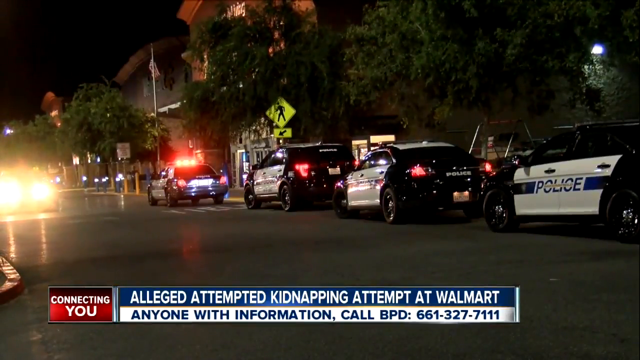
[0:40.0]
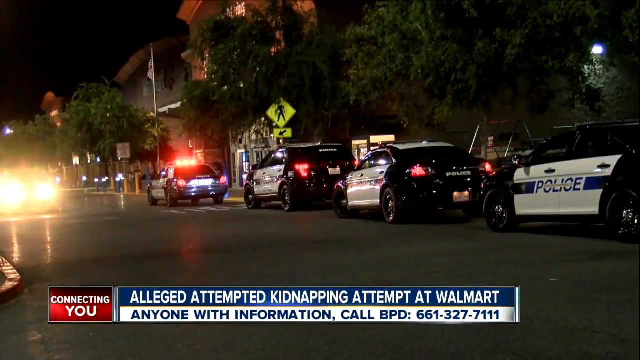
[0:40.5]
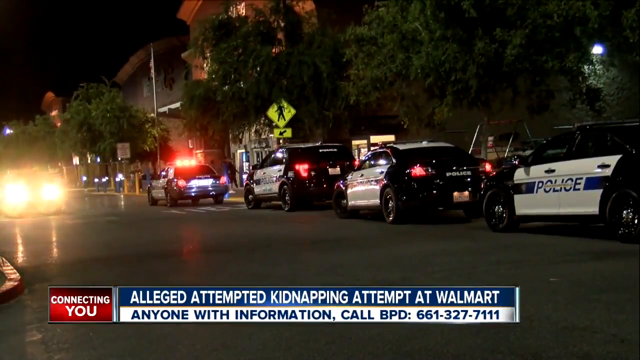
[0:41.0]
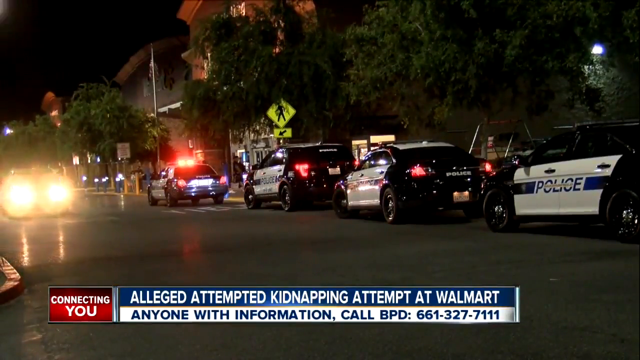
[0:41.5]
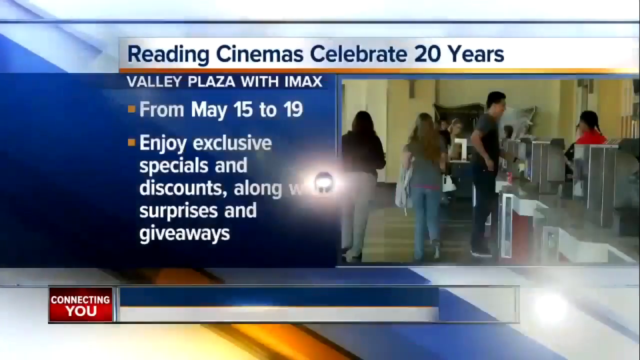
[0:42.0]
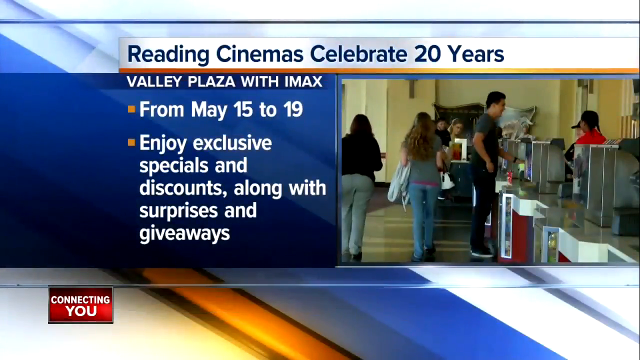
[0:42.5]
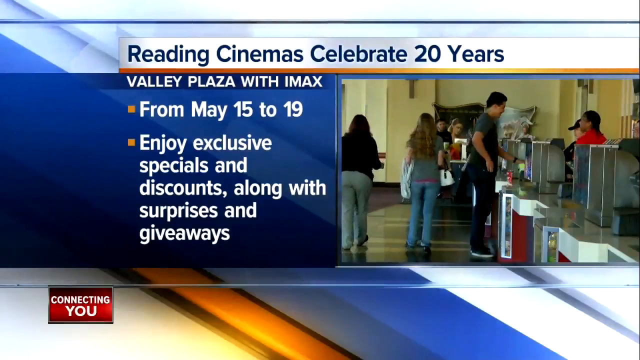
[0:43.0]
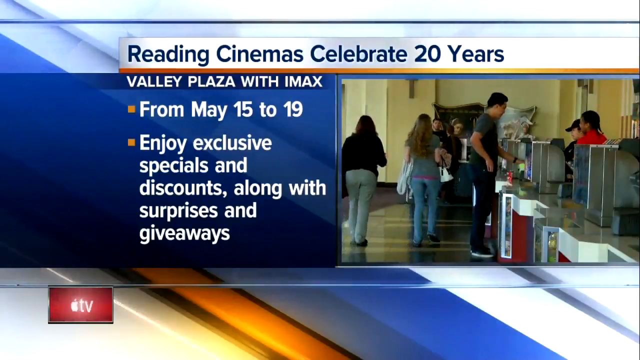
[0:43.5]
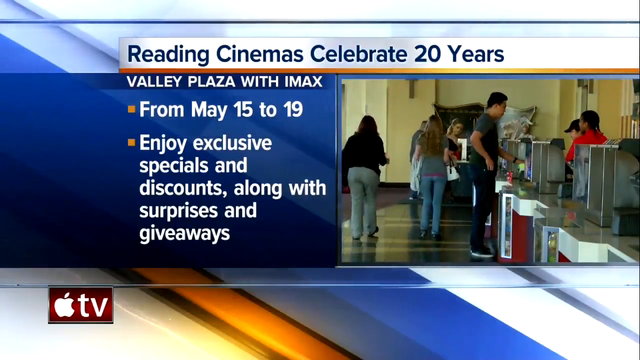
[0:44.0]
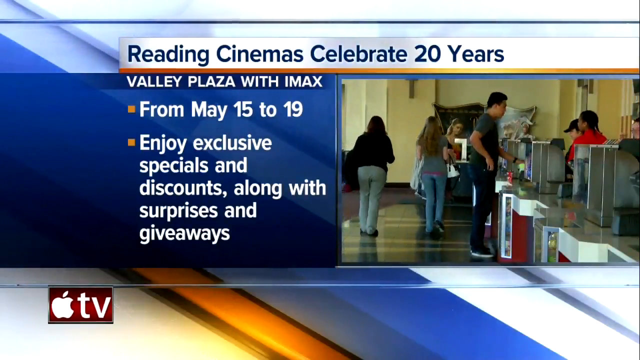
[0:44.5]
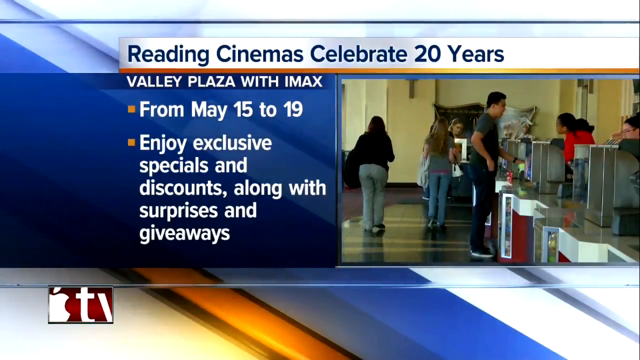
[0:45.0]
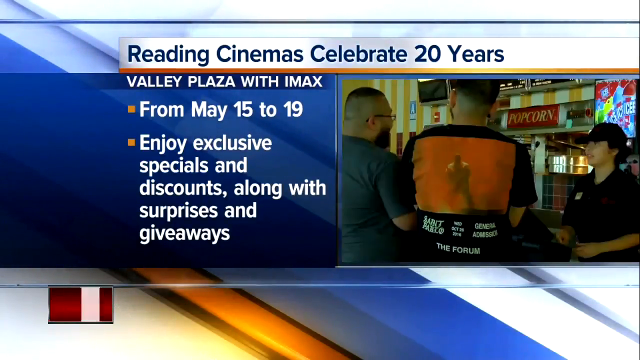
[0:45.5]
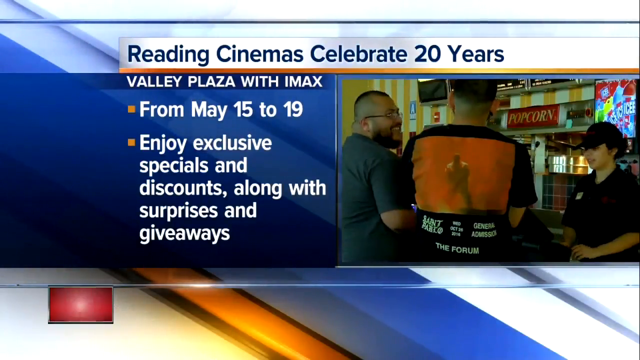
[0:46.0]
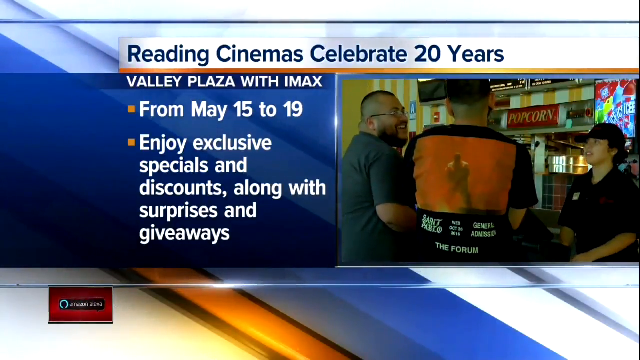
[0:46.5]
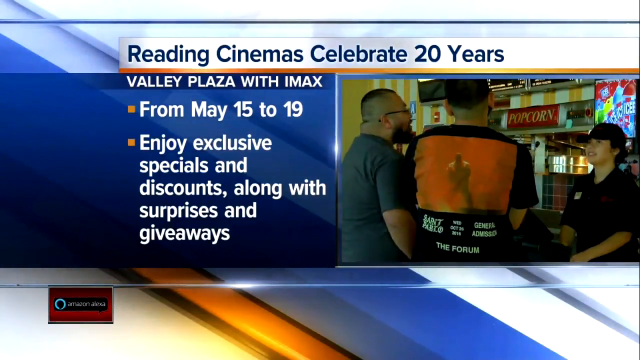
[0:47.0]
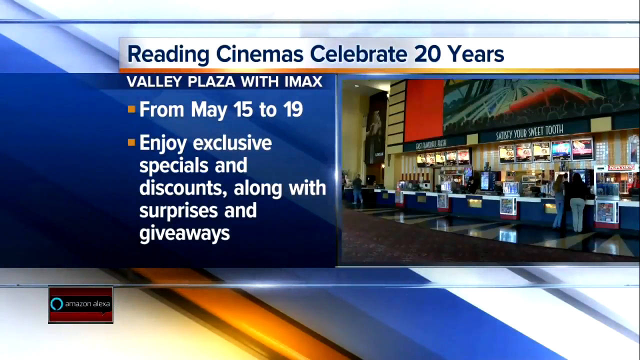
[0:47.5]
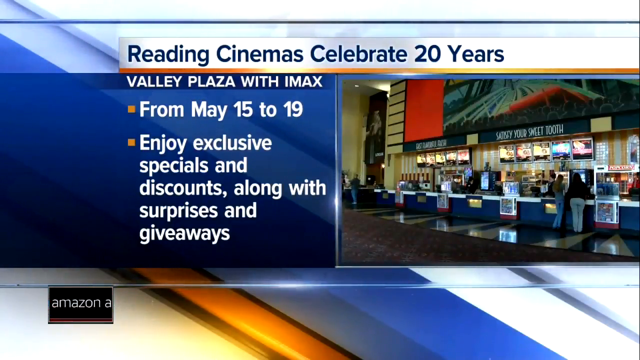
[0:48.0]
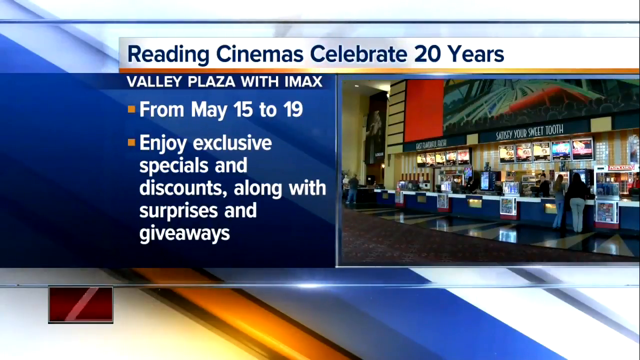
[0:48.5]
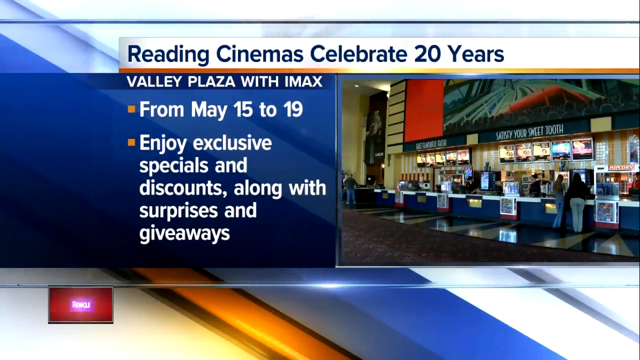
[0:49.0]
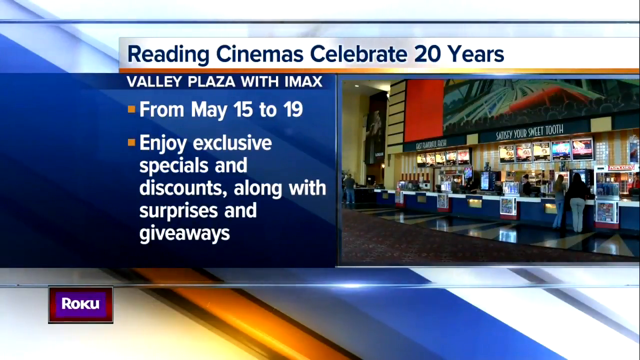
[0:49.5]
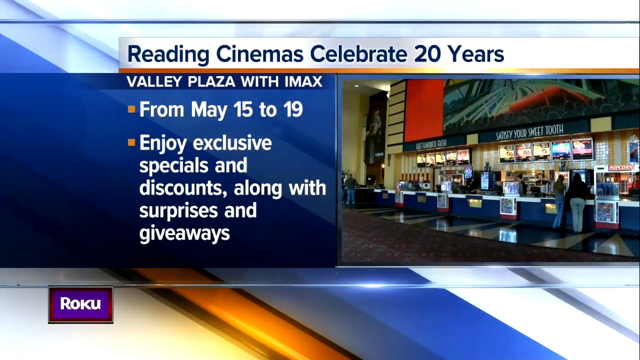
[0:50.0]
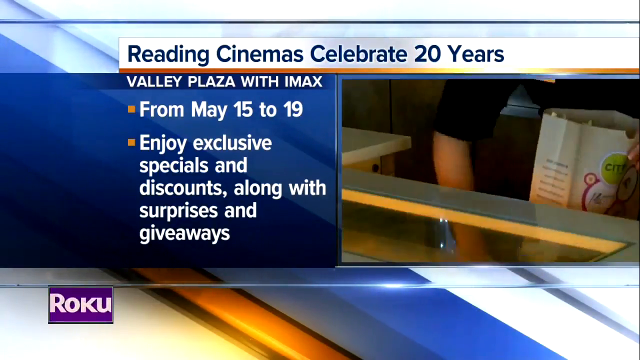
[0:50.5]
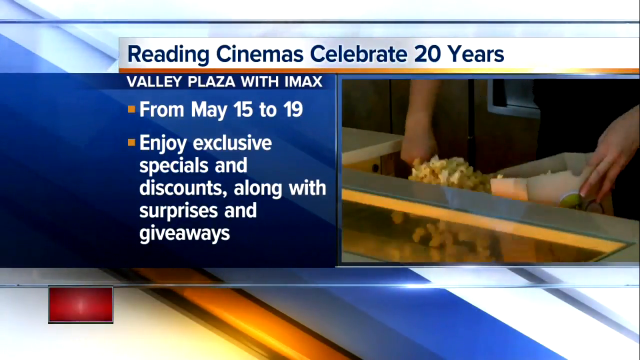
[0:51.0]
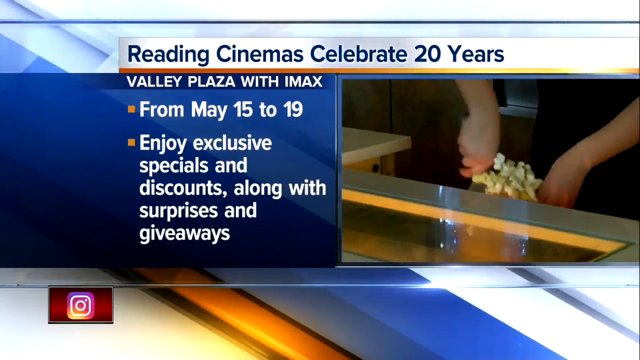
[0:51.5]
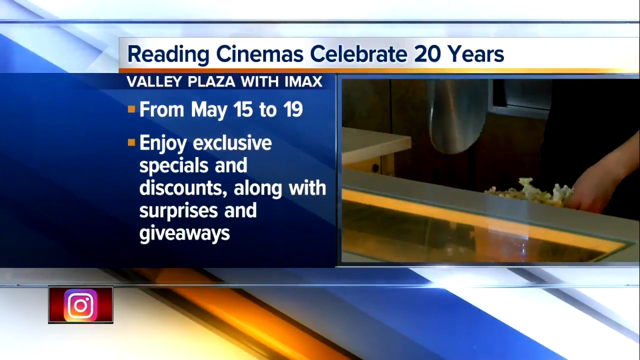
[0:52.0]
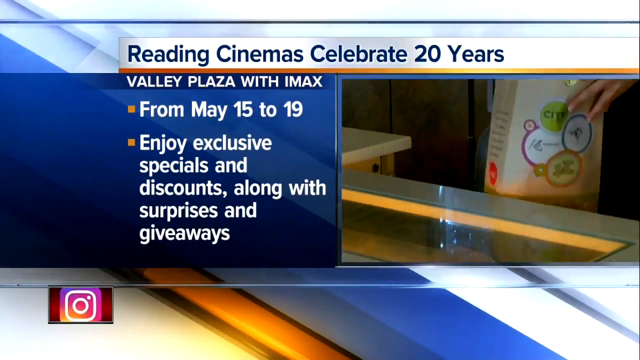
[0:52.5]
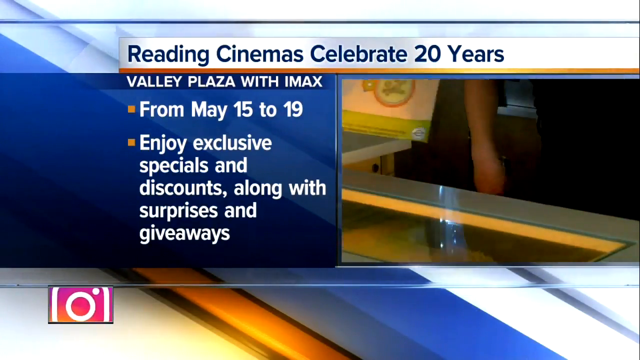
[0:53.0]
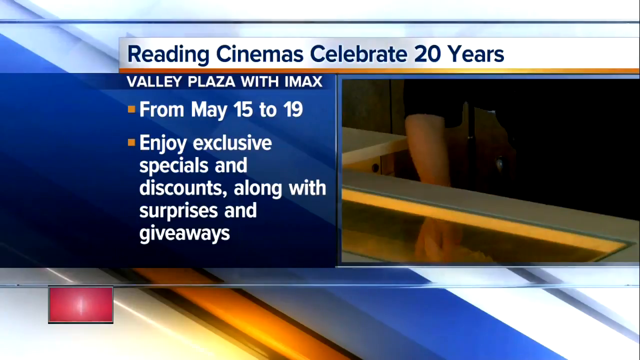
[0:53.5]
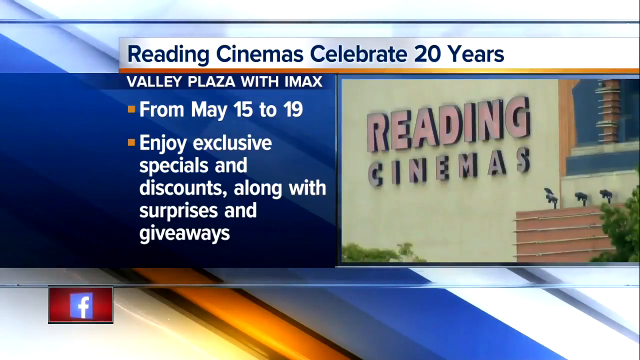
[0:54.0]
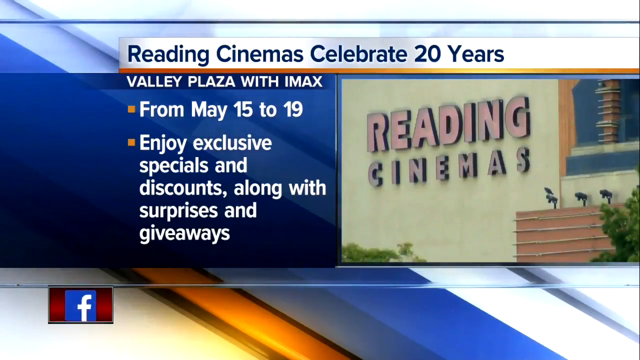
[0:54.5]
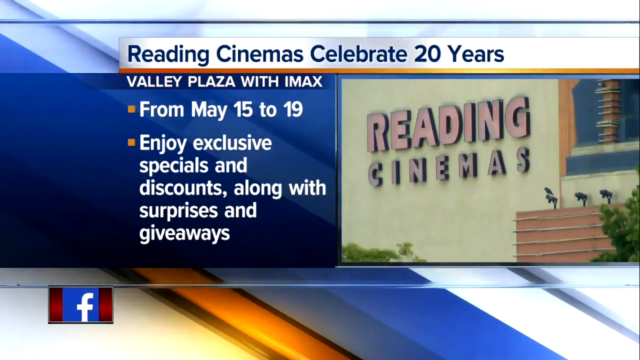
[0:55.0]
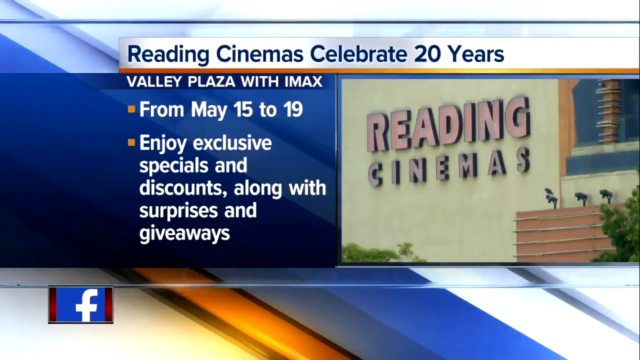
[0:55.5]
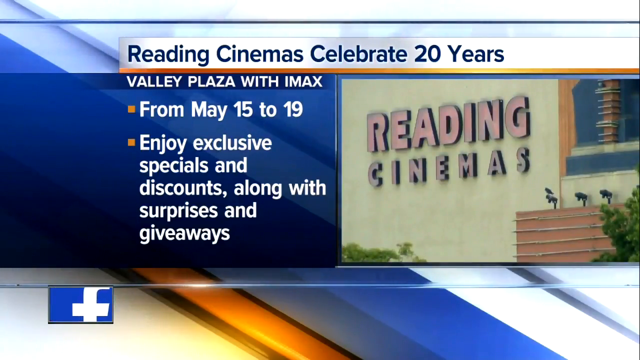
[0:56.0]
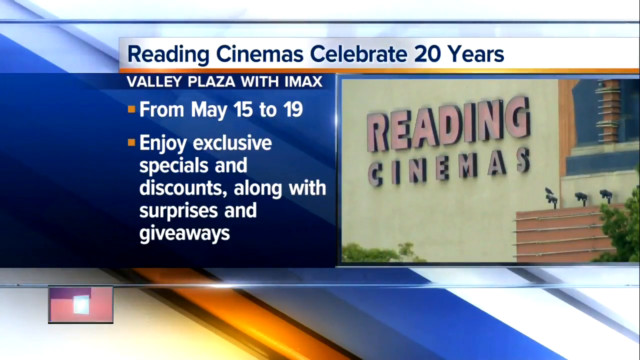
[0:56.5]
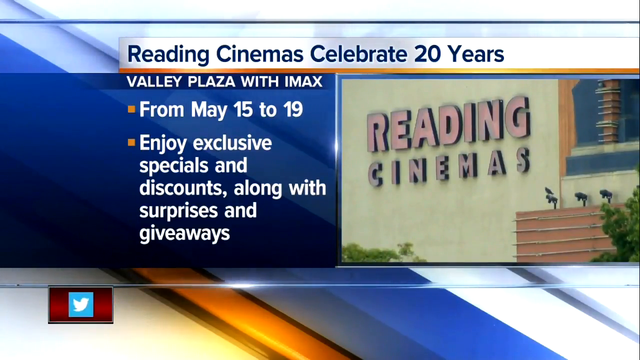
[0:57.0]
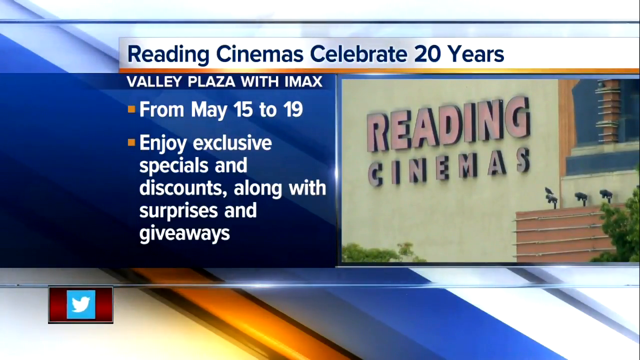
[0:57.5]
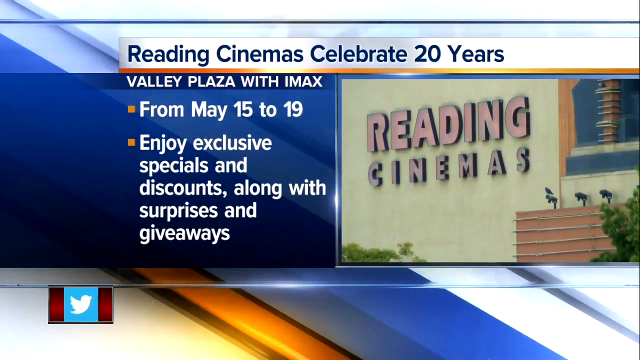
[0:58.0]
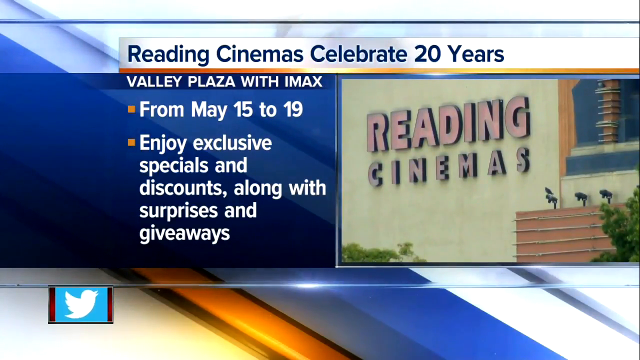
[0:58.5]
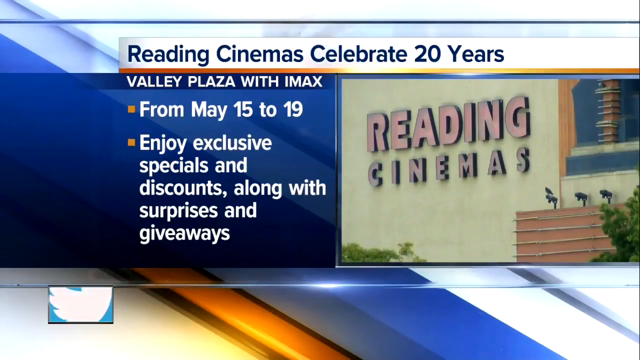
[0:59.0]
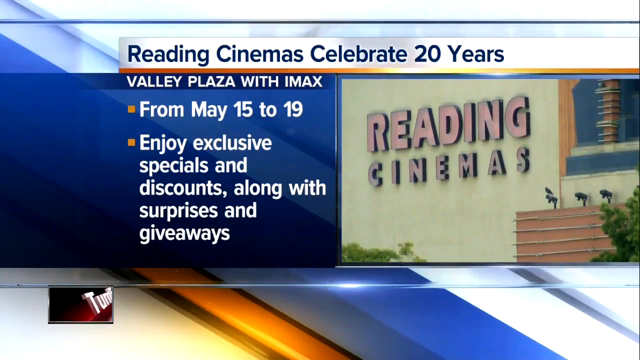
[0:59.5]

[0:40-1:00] Rows of police cars with flashing lights are on the street in front of a large Walmart store, where there was apparently an alleged attempted kidnapping inside. The newscast then switches to another story, "reading cinemas celebrate 20 years," possibly in Reading, California. A caption underneath says "Valley Plaza with IMAX from May 15th to 19th," and another bullet point says "enjoy exclusive specials and discounts along with surprises and giveaways." A photo shows a man standing at a concession stand and two young girls walking away with shopping bags in their hands in the lobby of a theater. A small box on the screen says "Apple TV." Footage shows people in line to buy movie tickets and popcorn, and a sign out front of the building says "reading cinemas."